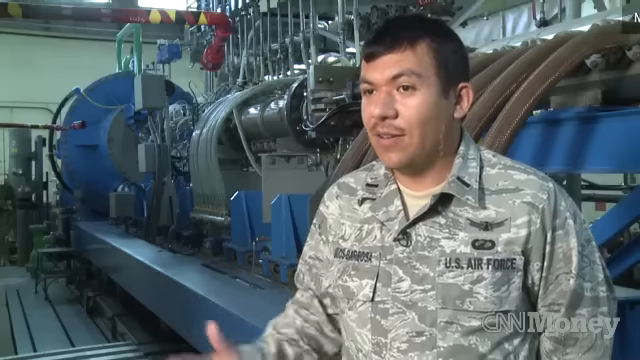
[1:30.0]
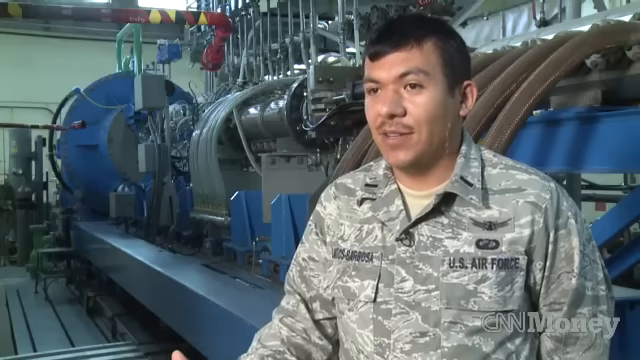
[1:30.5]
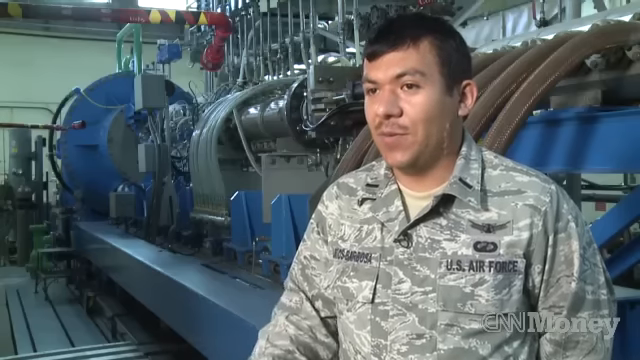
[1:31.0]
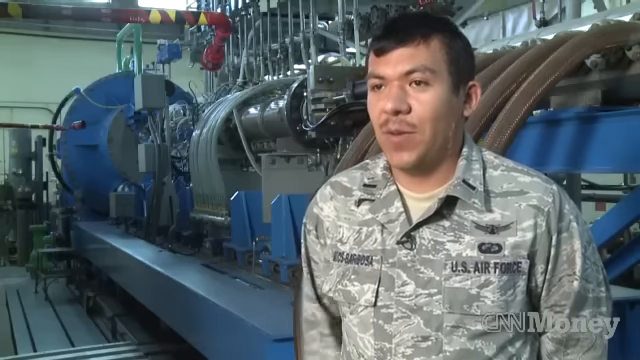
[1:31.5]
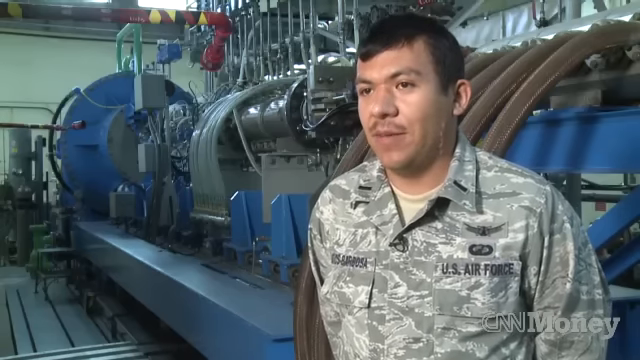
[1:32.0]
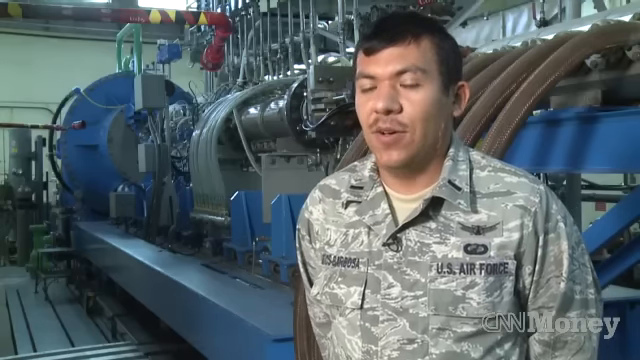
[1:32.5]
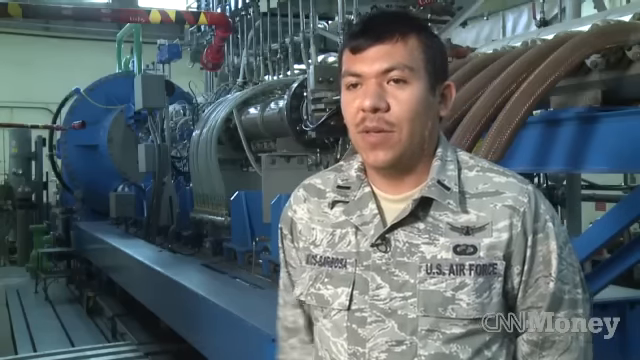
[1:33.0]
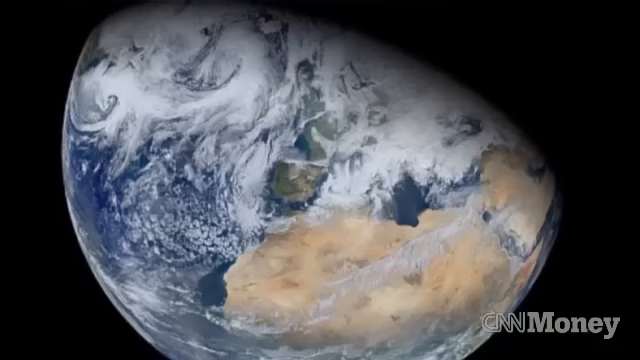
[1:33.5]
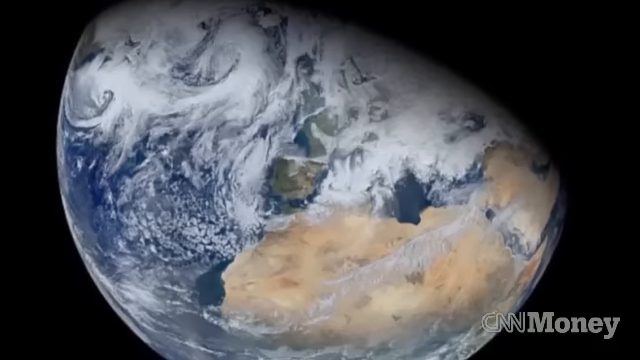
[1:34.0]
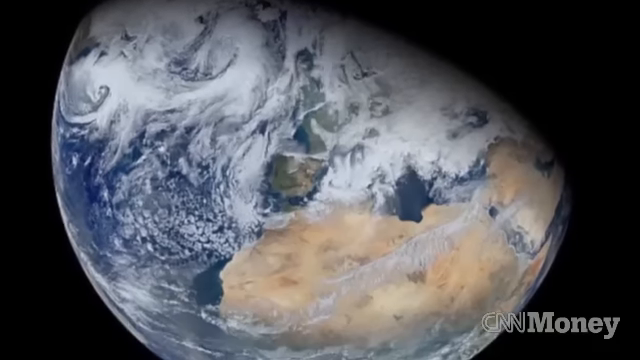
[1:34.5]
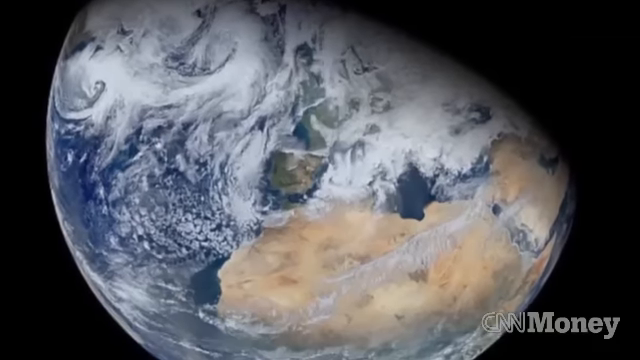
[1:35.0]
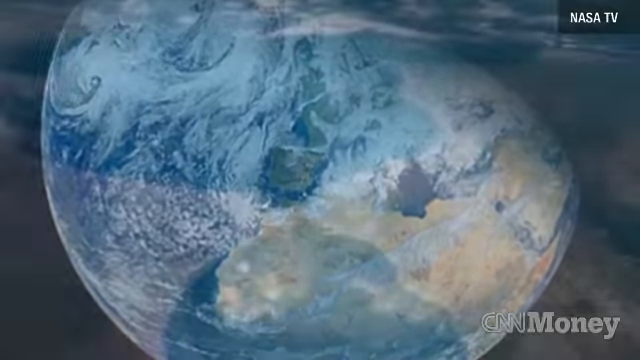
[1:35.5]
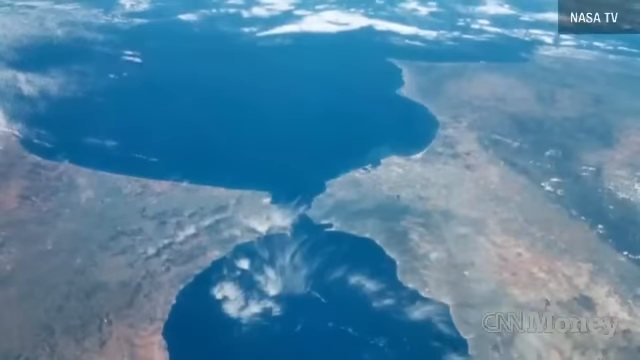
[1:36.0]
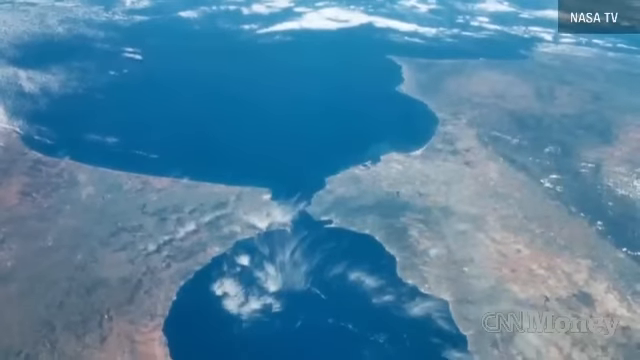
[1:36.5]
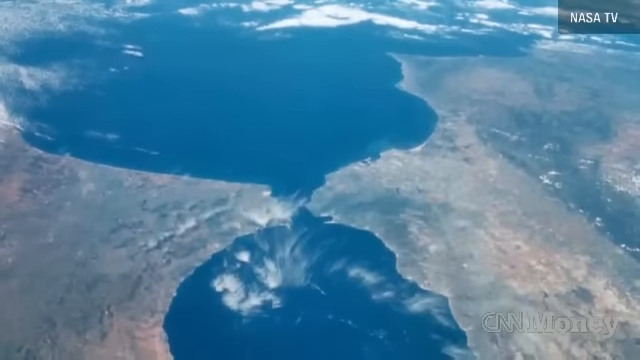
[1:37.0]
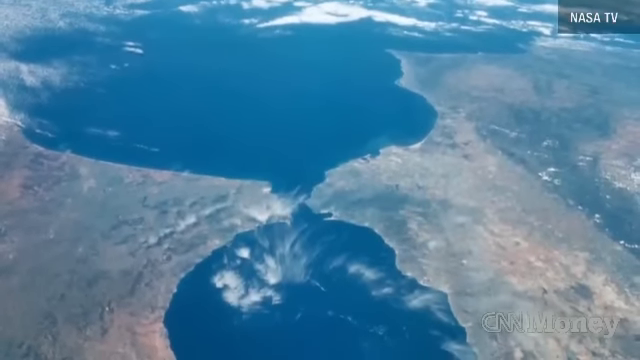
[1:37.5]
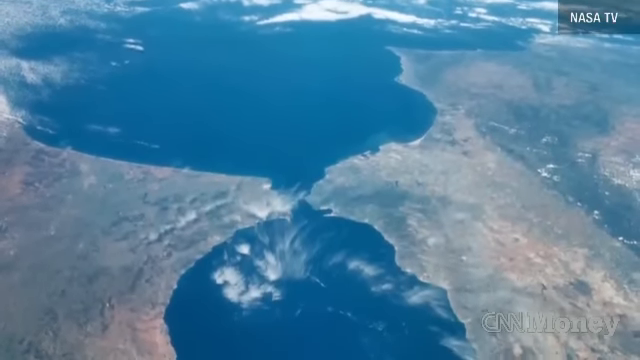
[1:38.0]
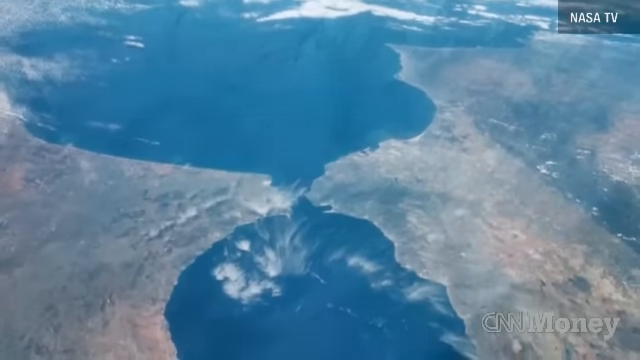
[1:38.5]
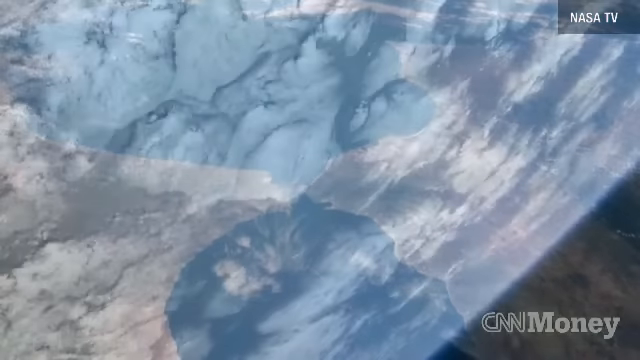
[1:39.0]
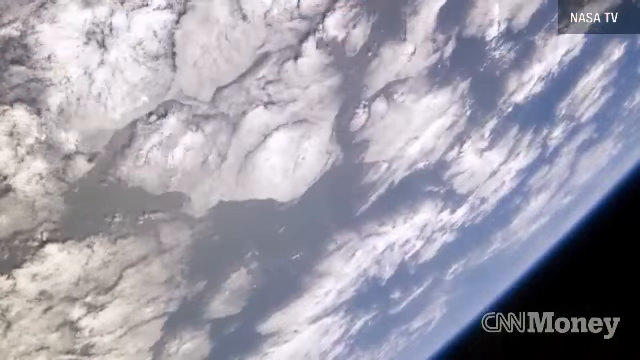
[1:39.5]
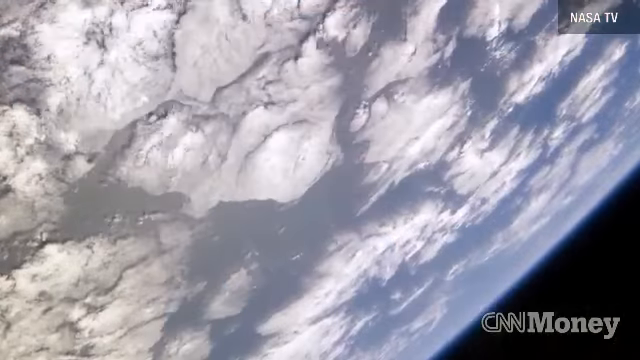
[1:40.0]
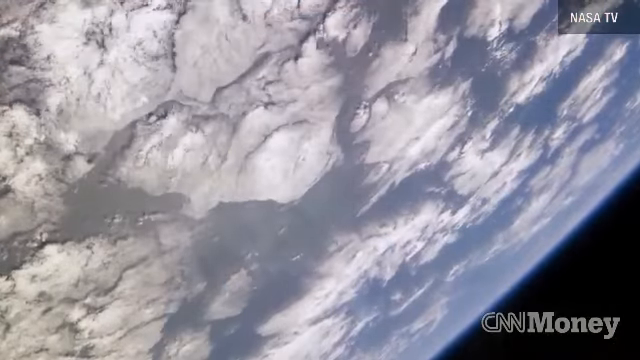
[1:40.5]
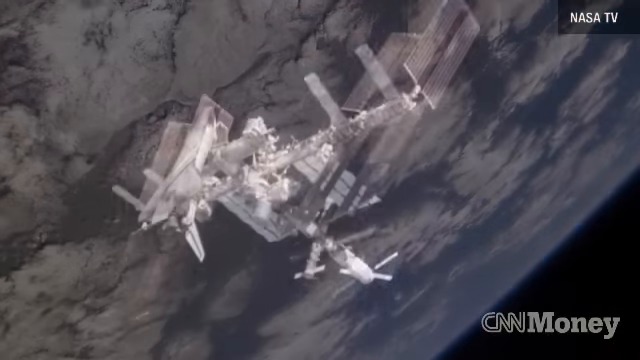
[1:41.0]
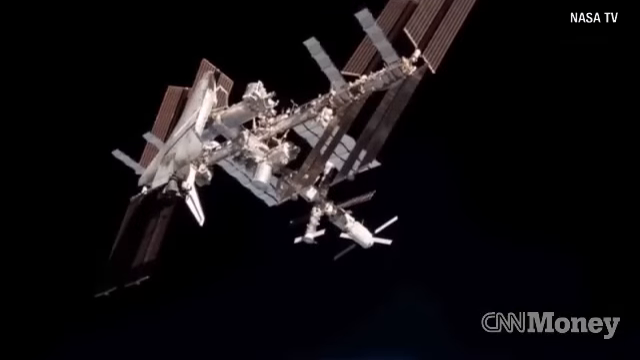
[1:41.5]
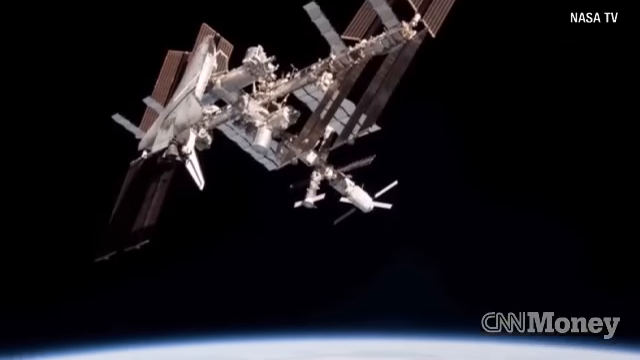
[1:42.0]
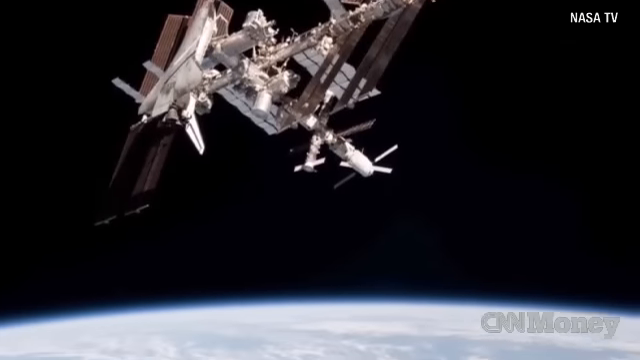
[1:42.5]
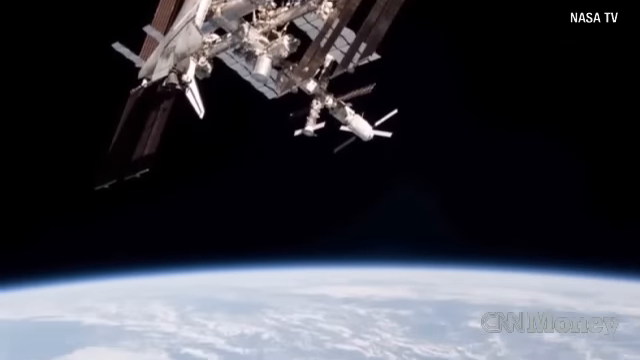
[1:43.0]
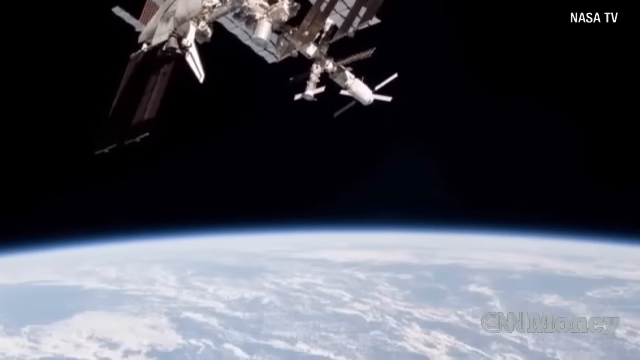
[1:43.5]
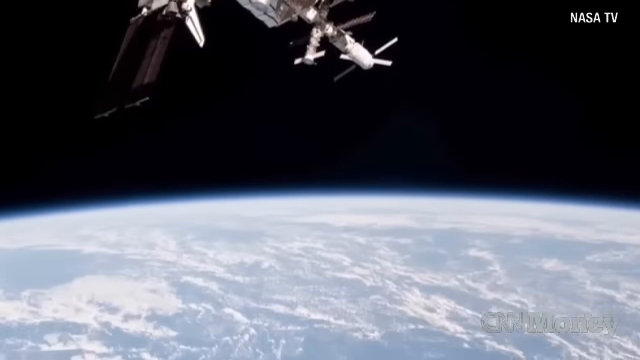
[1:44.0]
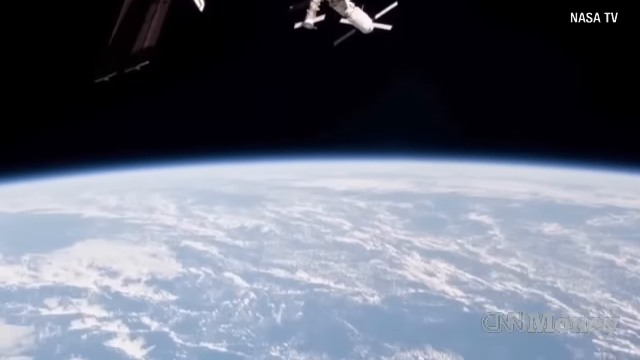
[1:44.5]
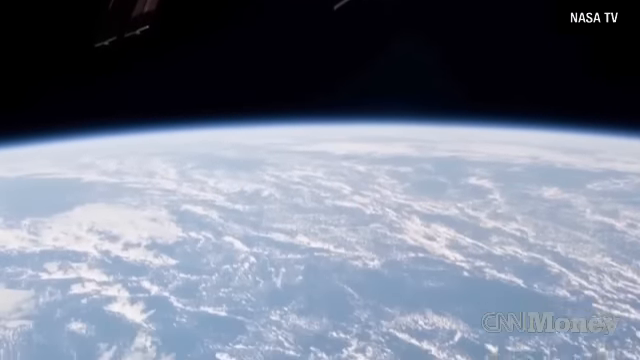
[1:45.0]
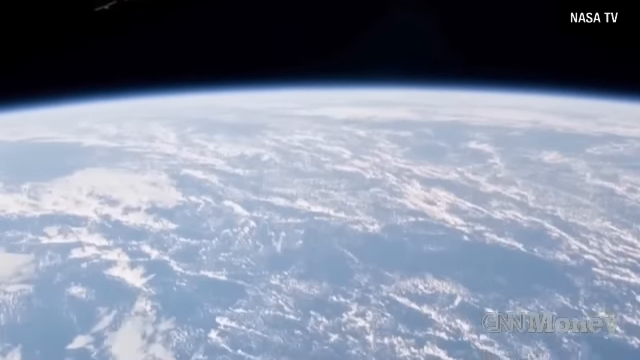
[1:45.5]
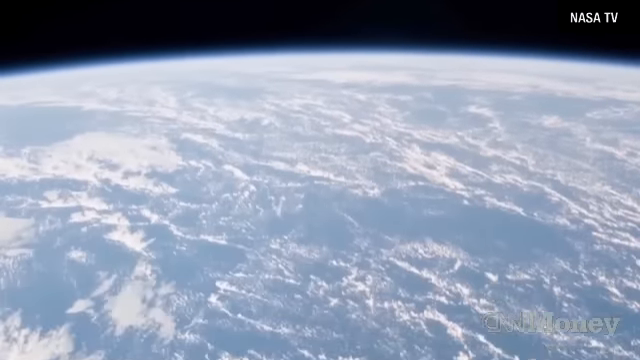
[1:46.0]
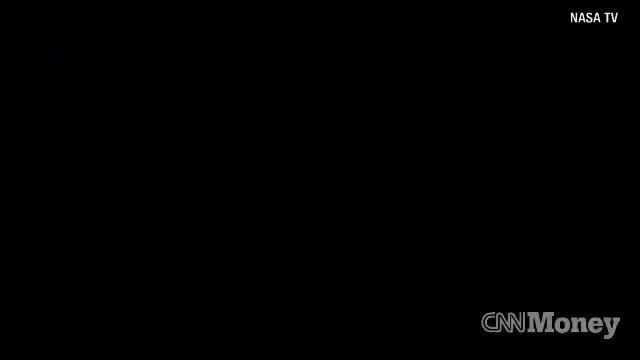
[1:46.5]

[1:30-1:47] First Lieutenant Jamie Barbosa of the U.S. Air Force is in the lab, speaking and standing in front of a large piece of equipment. The video cuts to a kind of picture of what the Earth looks like at night, followed by scenes from around the Earth from NASA TV, looking down. Another scene shows the clouds, and then what looks like a piece of space equipment that monitors is shown.